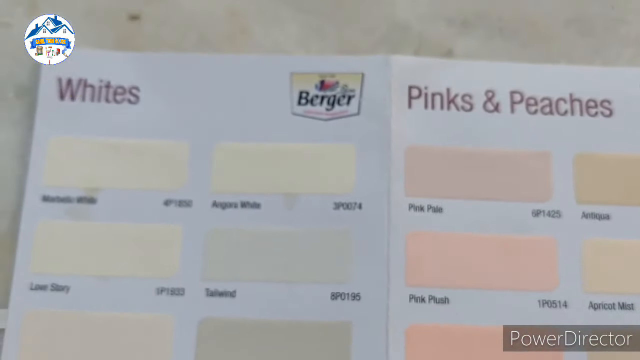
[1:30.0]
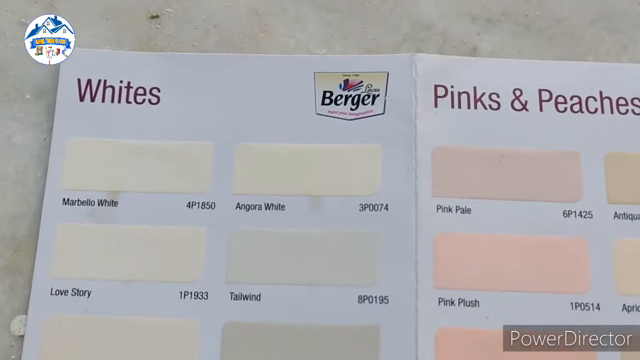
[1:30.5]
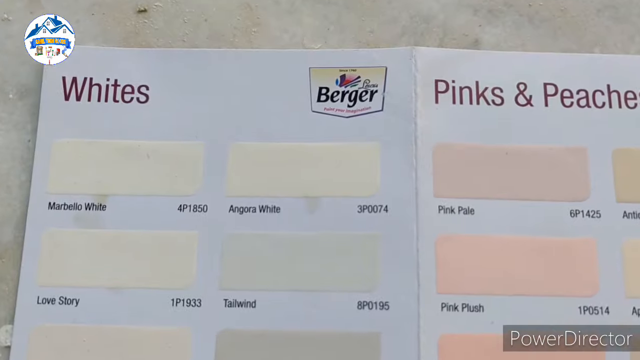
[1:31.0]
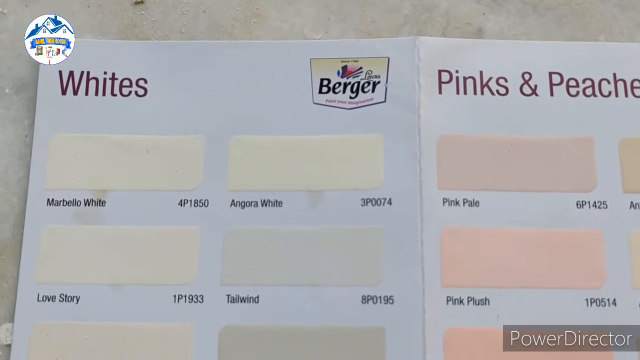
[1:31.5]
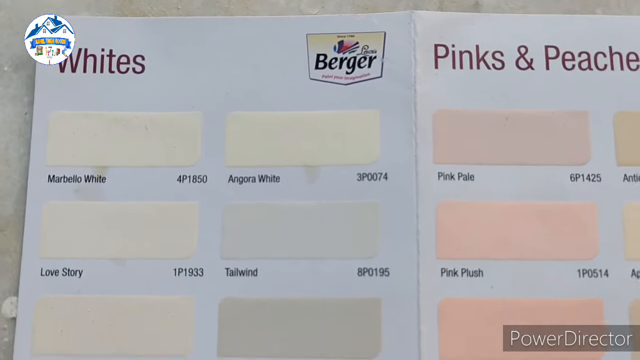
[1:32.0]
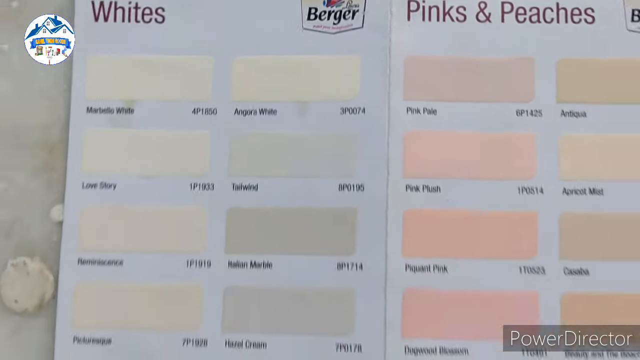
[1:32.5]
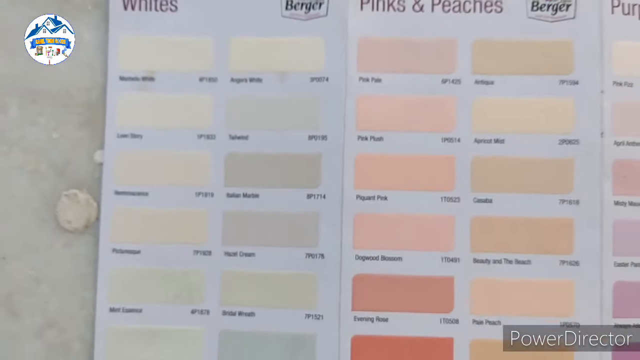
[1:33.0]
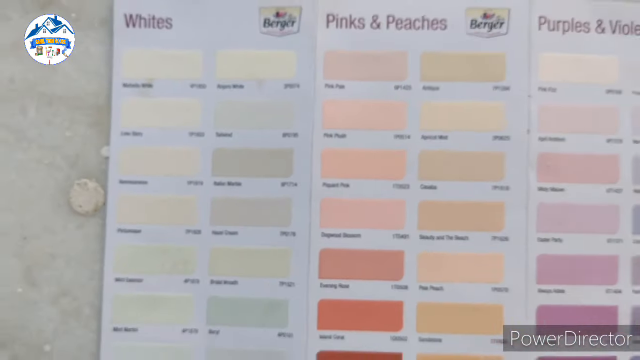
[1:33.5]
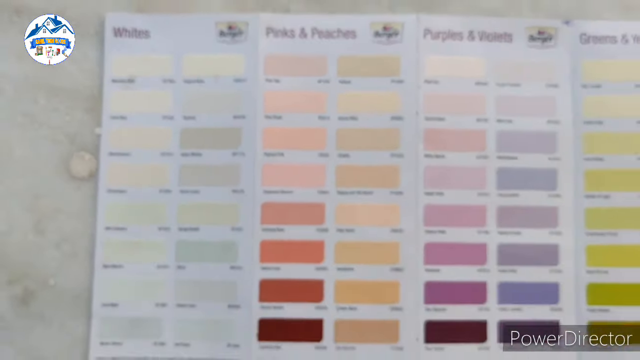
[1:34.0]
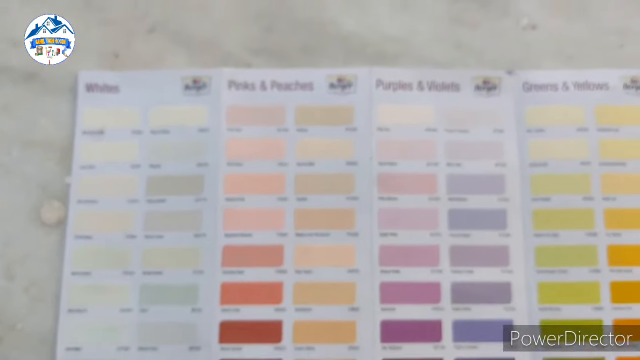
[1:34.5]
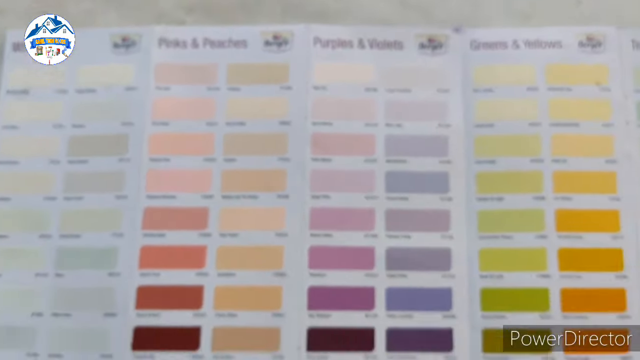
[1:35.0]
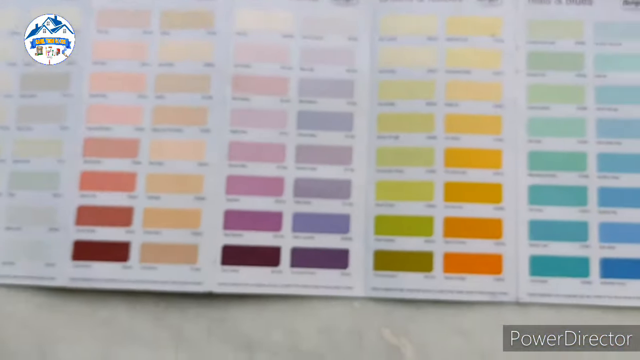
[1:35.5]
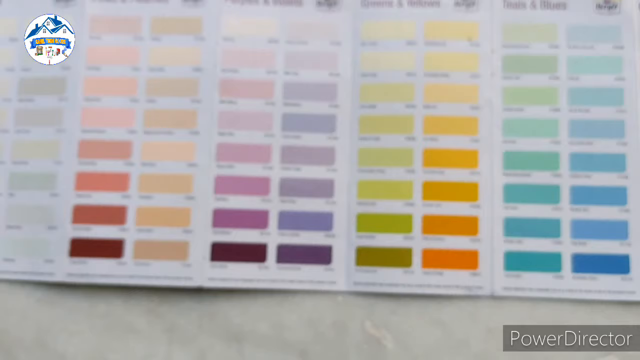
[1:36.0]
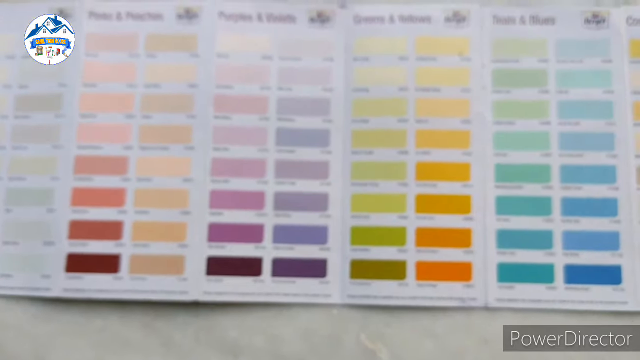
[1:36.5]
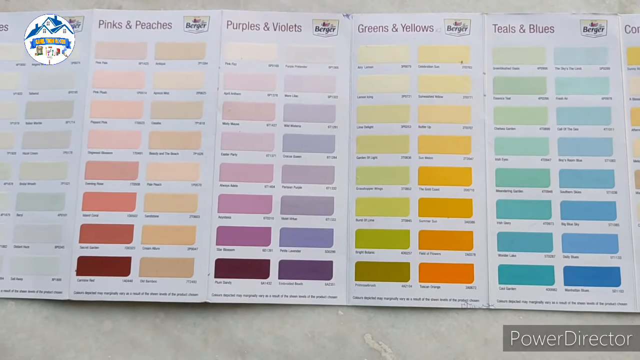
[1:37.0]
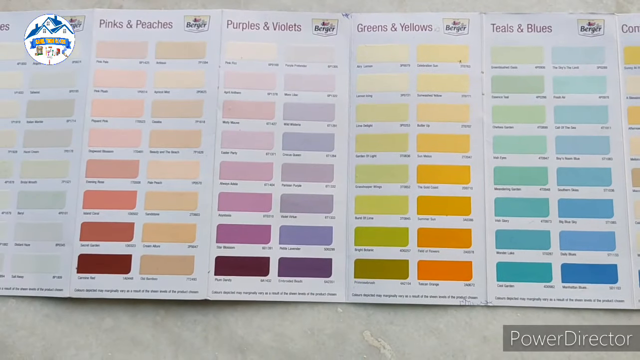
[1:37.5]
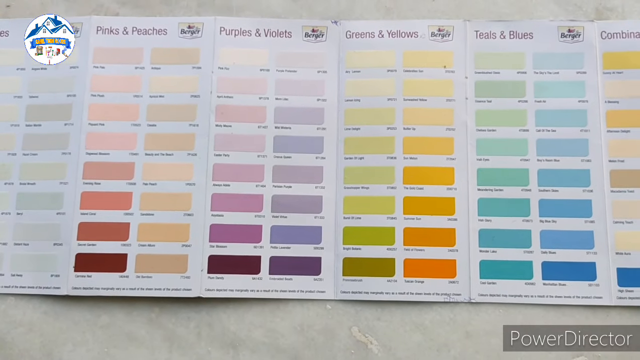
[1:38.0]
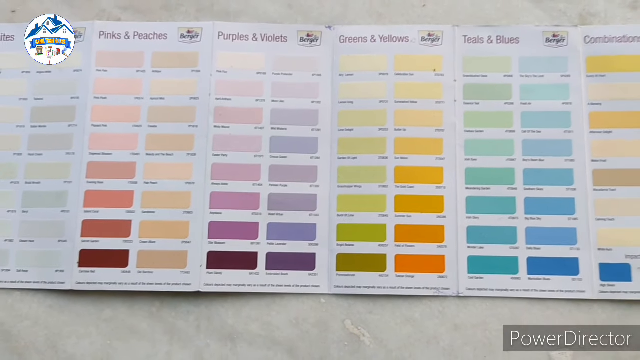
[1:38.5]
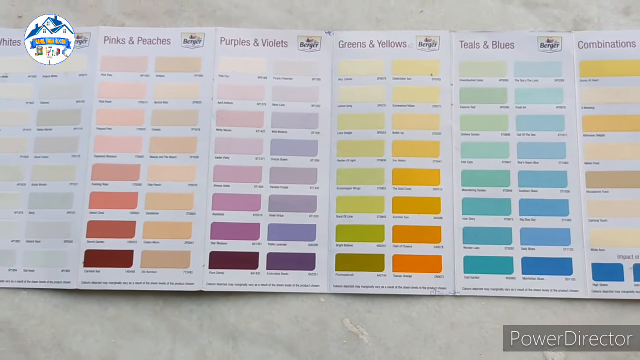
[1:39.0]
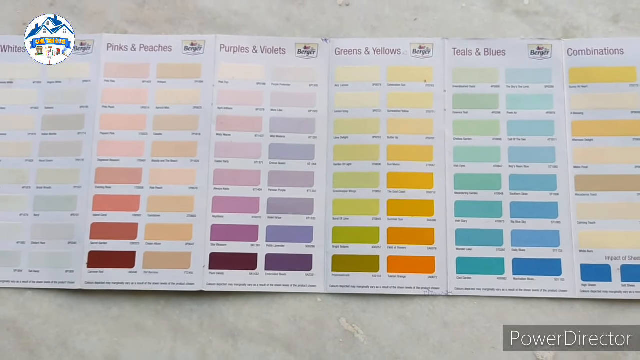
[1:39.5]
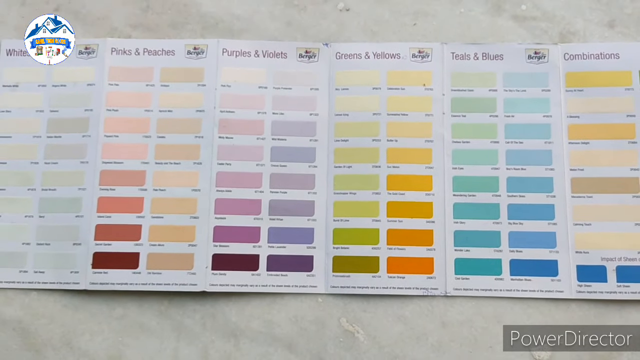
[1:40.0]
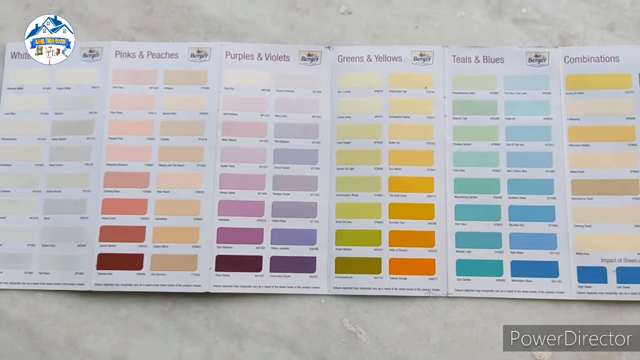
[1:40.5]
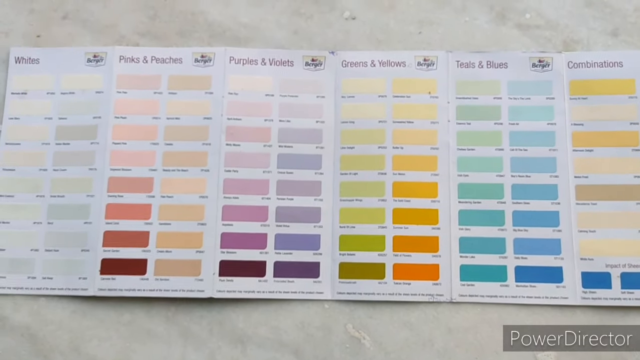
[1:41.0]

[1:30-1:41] The view starts zoomed in on the whites and the pinks and peaches section, then the camera zooms out to reveal the whole wide range of color options kind of next to each other. It starts with lighter colors and gradually gets brighter going from purples and violets to greens and yellows, which are probably the brightest, and at the very end there is a combinations section. The view shows how large the whole sample section is. The backdrop is a white, potentially marble counter, likely in an open setting, possibly a showroom or a store that sells paint or has paint samples.